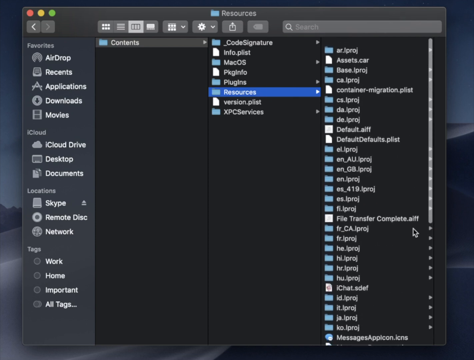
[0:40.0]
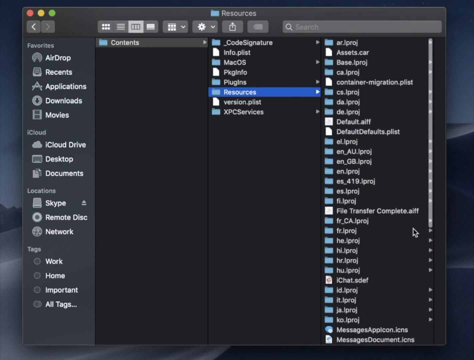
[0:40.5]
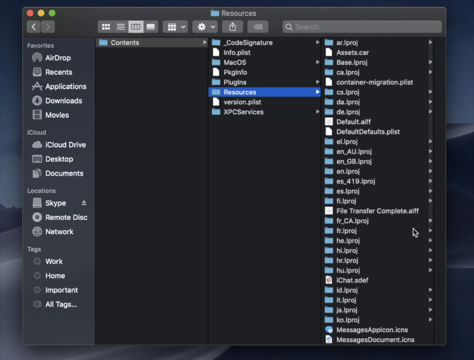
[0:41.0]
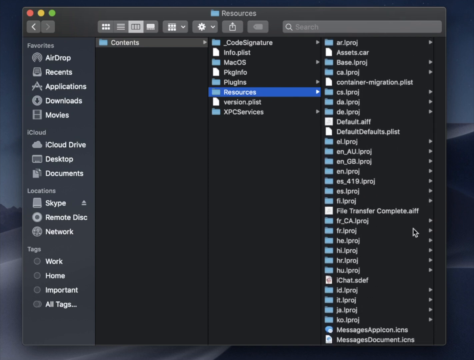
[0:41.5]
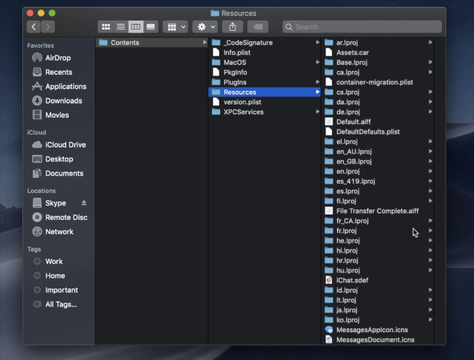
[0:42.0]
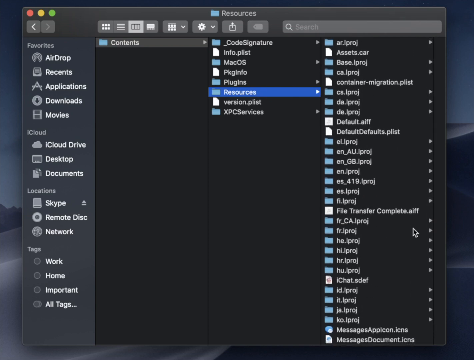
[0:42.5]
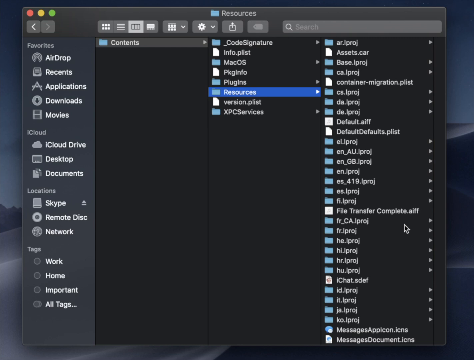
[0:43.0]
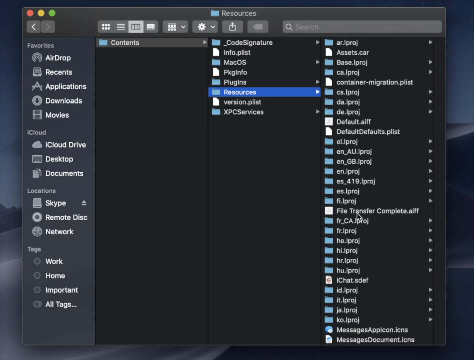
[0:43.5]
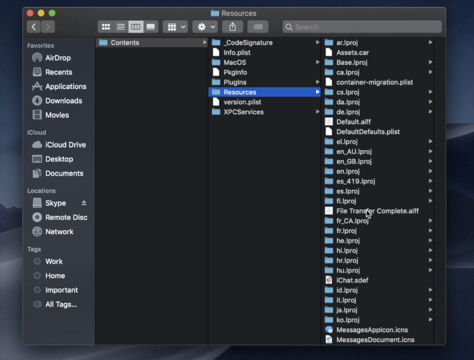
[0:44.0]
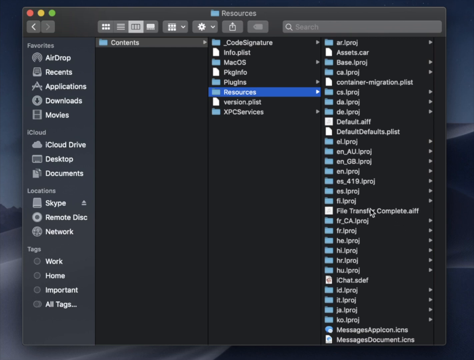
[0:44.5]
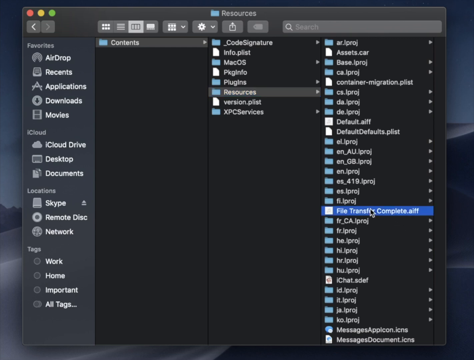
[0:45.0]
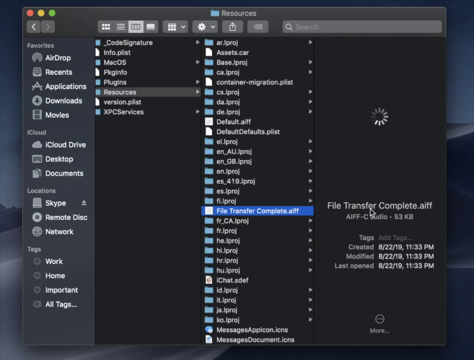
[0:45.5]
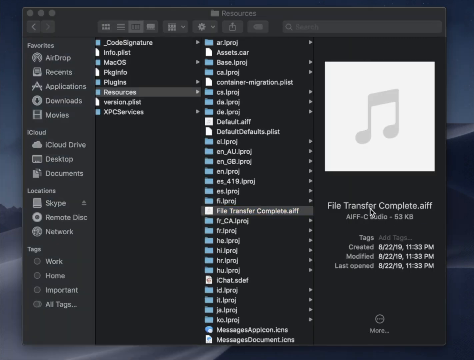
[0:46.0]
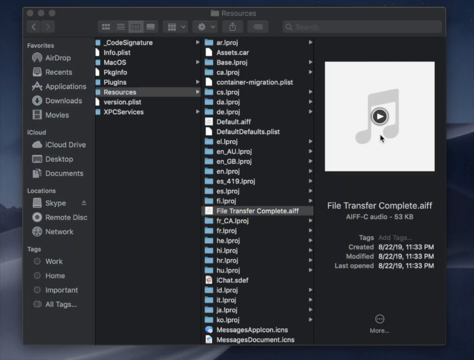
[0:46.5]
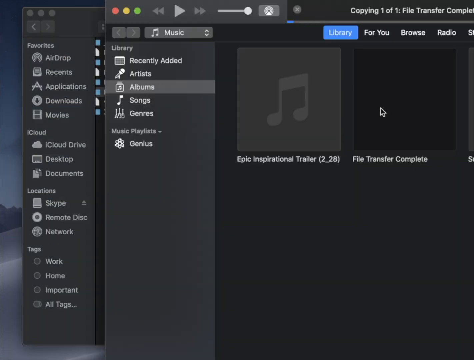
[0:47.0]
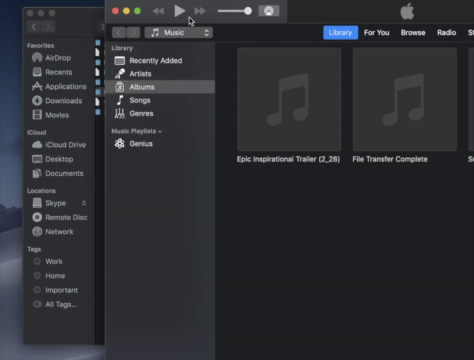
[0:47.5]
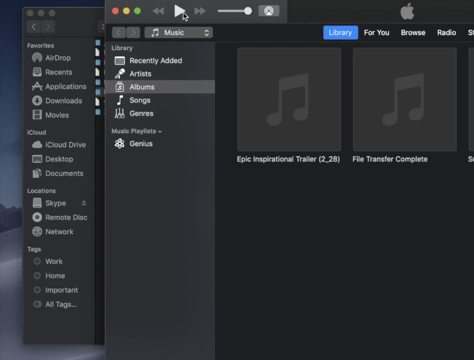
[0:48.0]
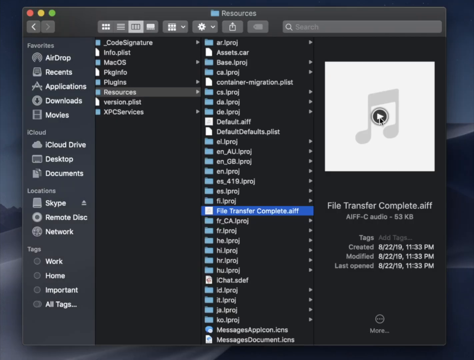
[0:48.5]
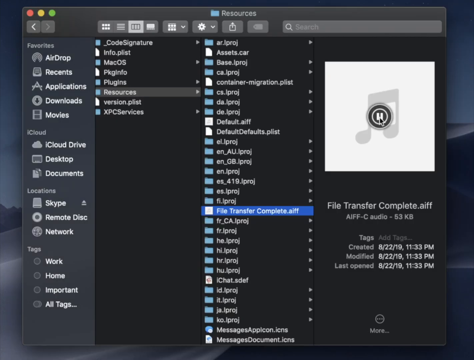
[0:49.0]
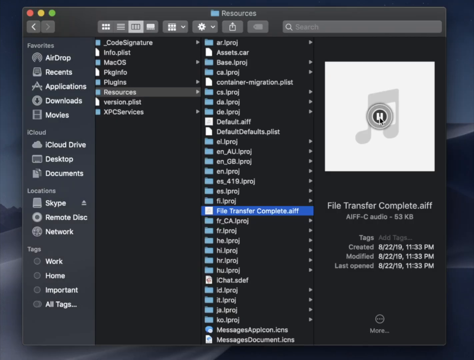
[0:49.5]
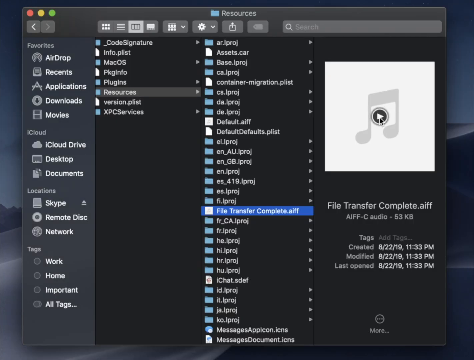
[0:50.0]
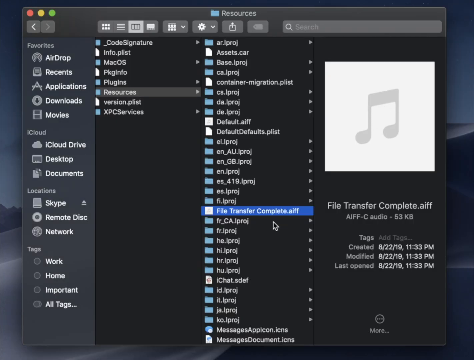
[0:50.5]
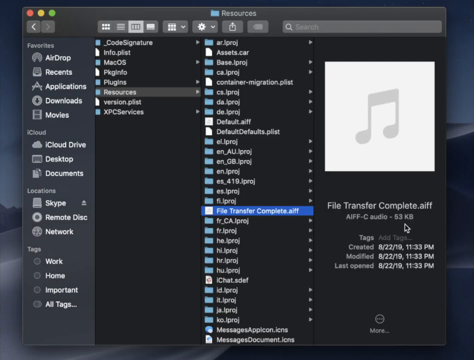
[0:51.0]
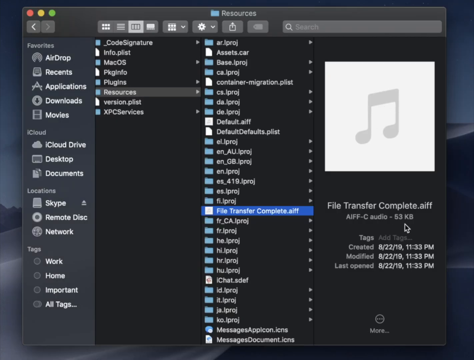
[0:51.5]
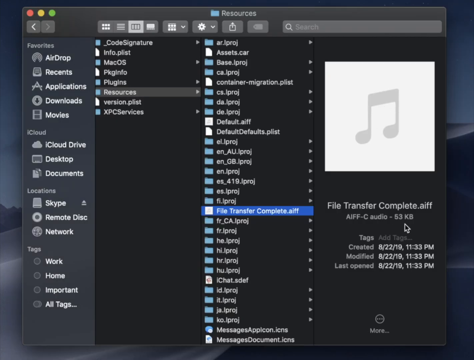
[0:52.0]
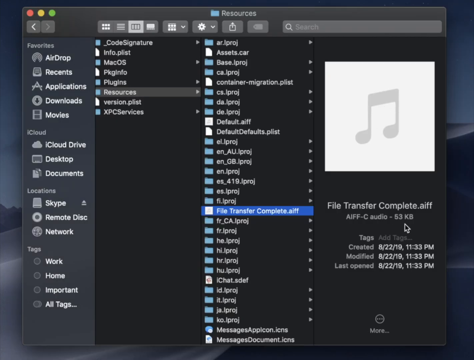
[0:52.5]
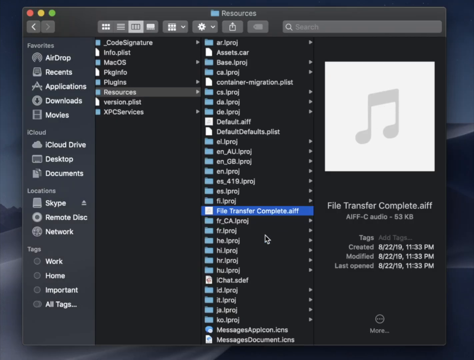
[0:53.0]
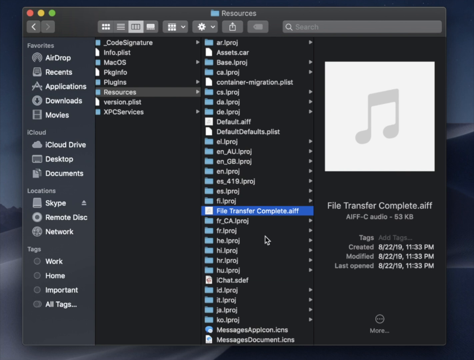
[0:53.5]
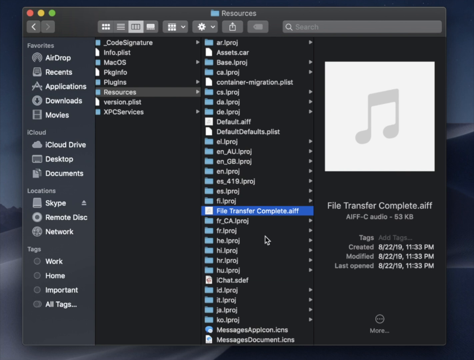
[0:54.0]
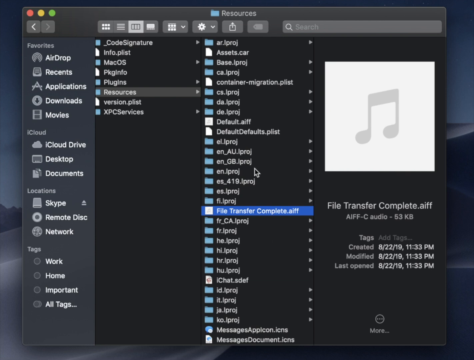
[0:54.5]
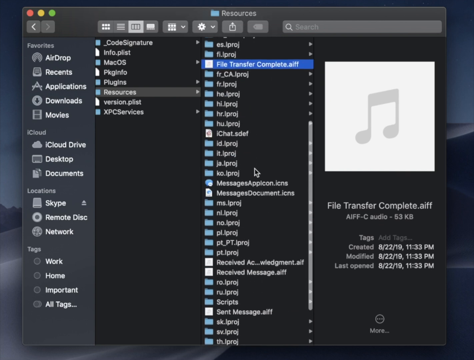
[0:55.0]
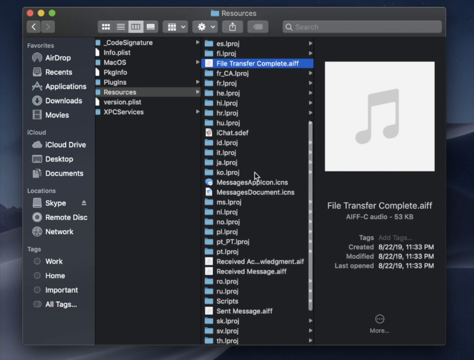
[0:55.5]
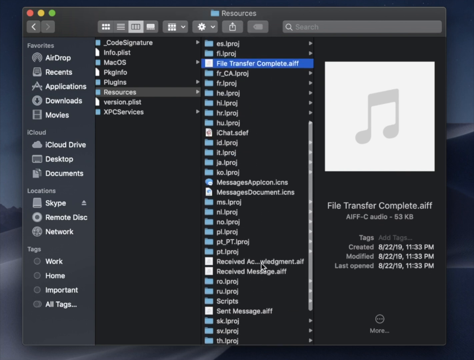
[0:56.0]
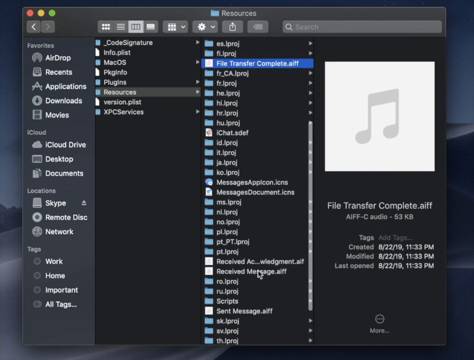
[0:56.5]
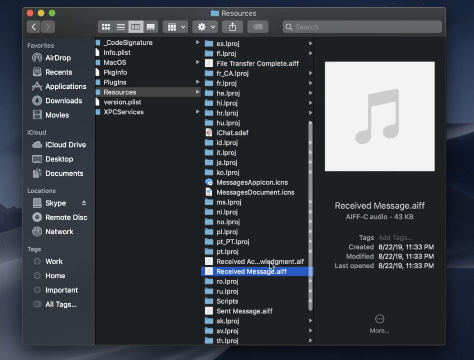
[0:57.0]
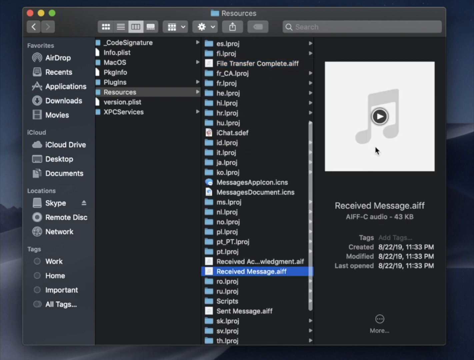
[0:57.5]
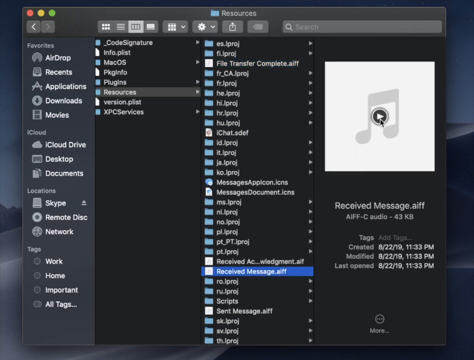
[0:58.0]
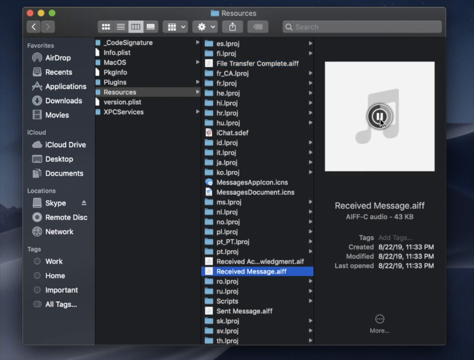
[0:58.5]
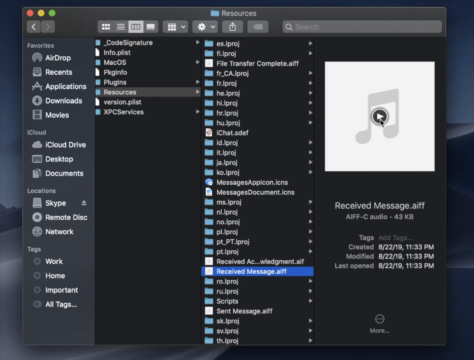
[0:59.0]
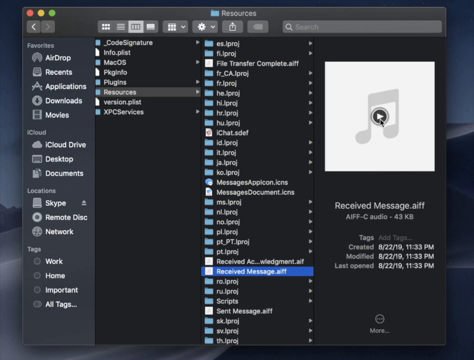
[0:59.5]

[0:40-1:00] The man scrolls through the Resources folder, going very quickly through everything. He seems to click an audio file, File Transfer Complete AIFF, and file info appears, such as when it was created and modified. When he clicks it, the view changes to another one that is hard to make out, possibly the macOS Music application, where a few files besides File Transfer Complete are visible, including Epic Inspirational Trailer (2_28). He then scrolls, finds the ReceivedMessage.aiff file and clicks it. He seems to be showing how to look for a sound file.